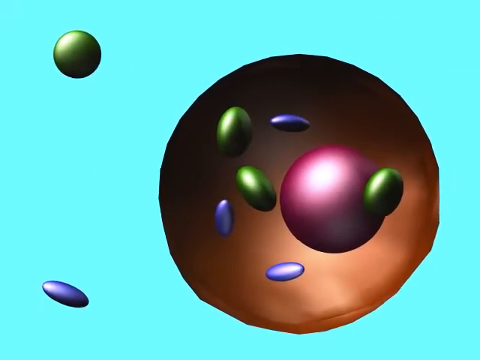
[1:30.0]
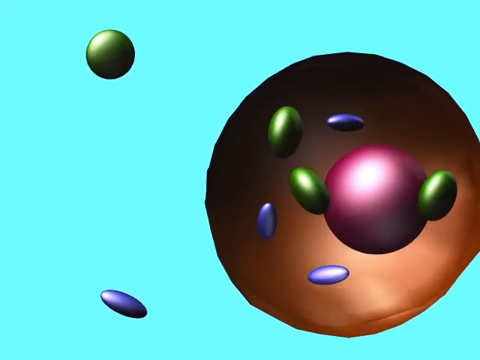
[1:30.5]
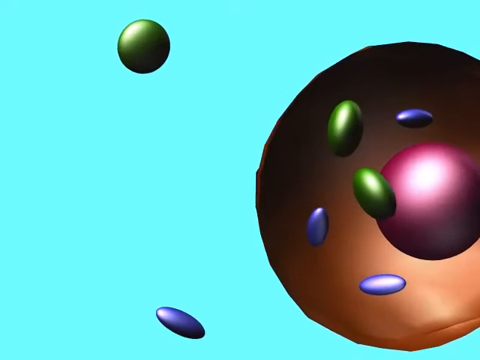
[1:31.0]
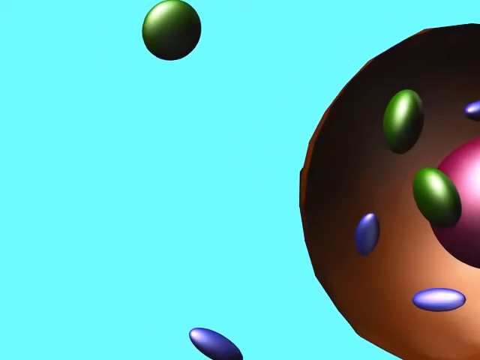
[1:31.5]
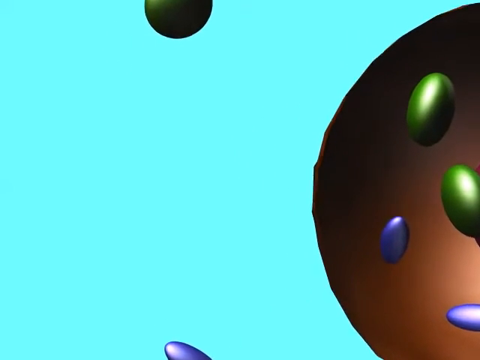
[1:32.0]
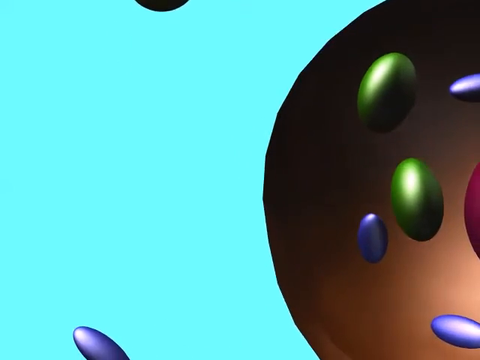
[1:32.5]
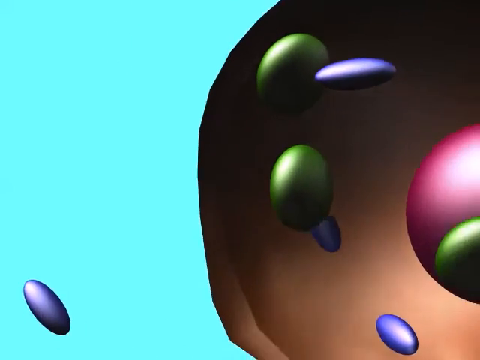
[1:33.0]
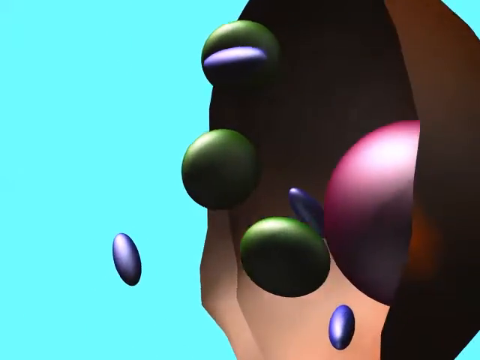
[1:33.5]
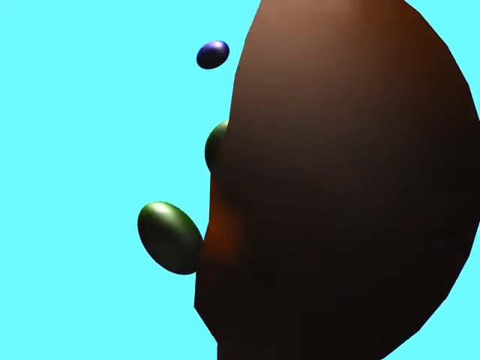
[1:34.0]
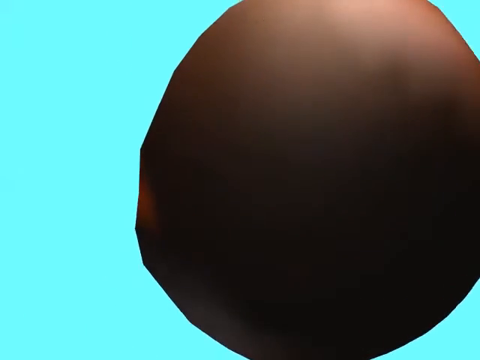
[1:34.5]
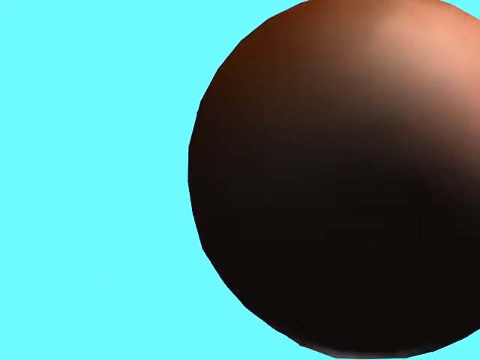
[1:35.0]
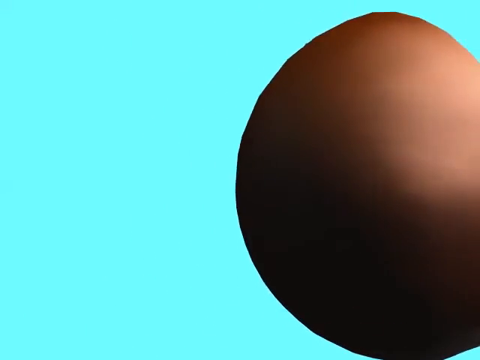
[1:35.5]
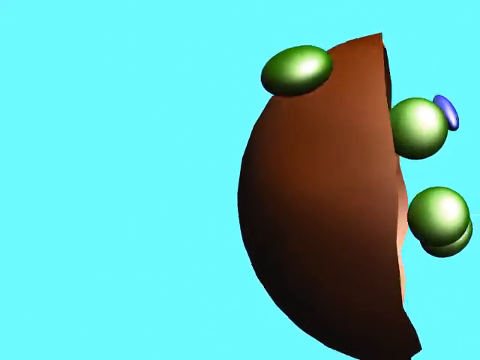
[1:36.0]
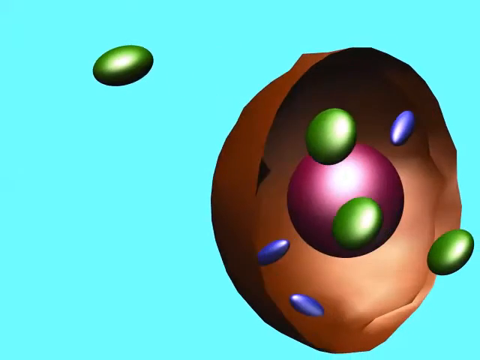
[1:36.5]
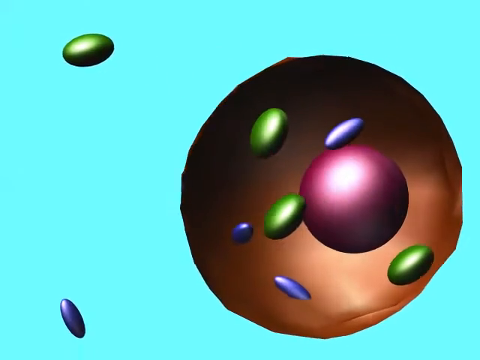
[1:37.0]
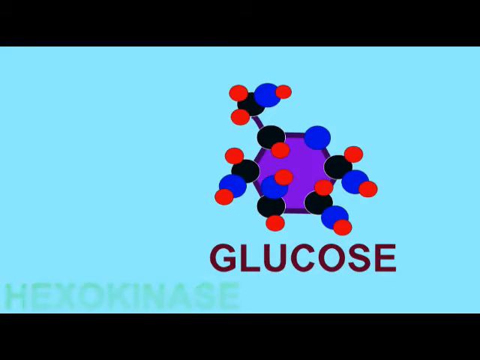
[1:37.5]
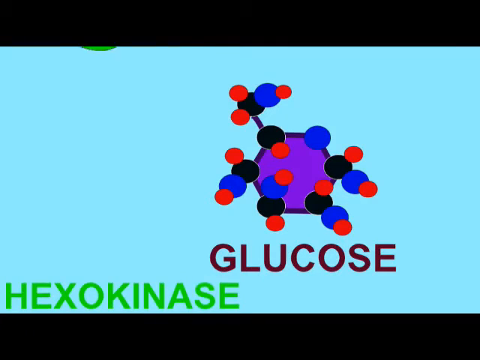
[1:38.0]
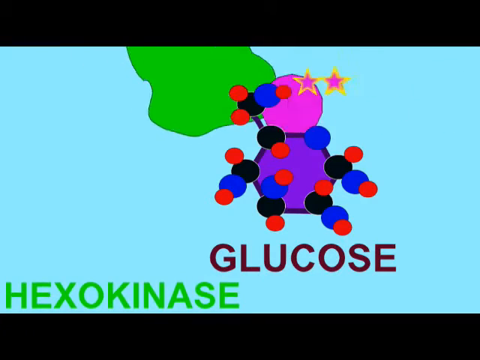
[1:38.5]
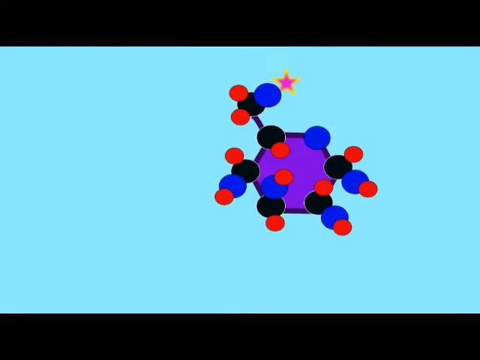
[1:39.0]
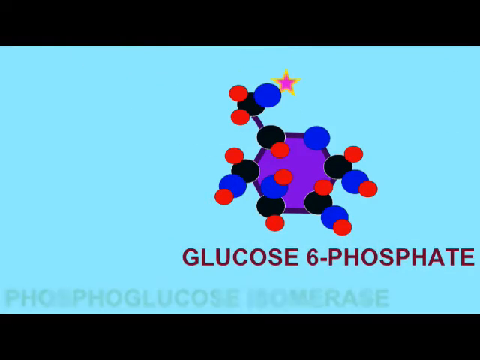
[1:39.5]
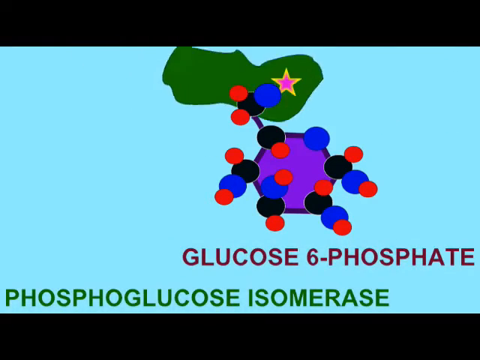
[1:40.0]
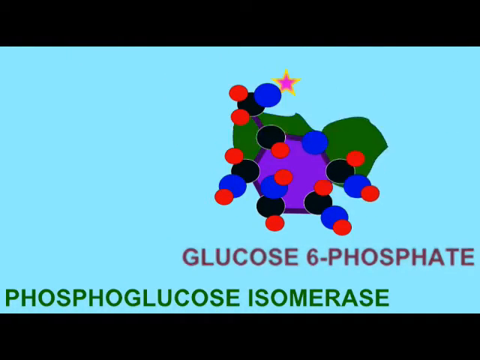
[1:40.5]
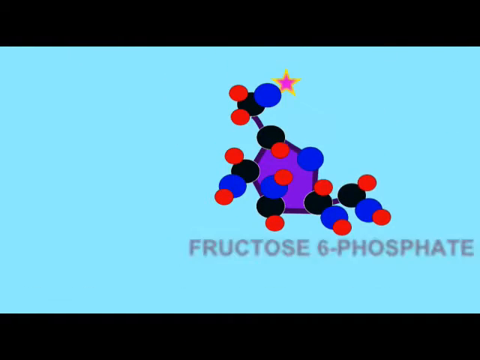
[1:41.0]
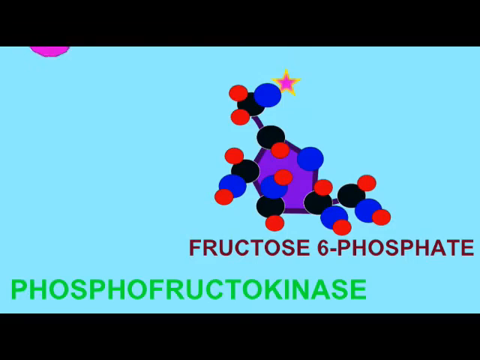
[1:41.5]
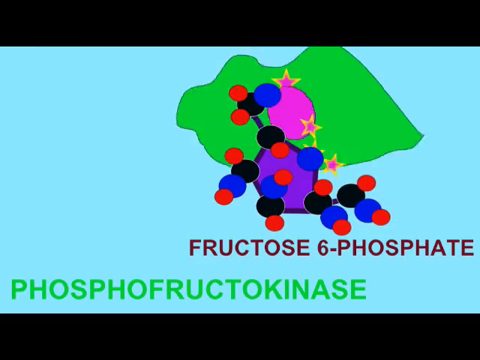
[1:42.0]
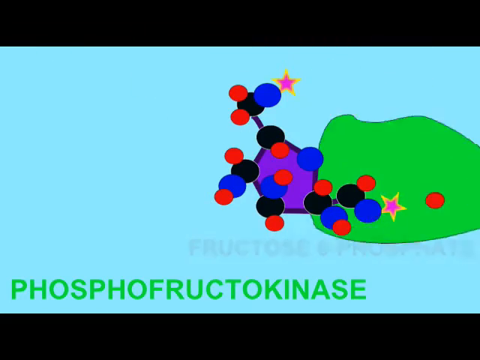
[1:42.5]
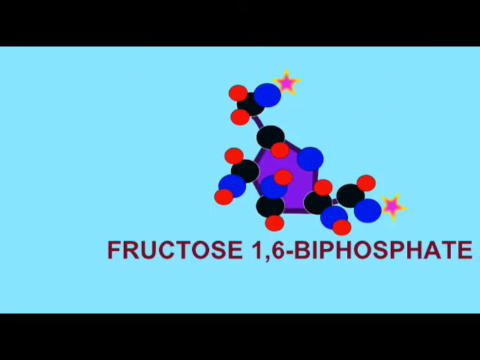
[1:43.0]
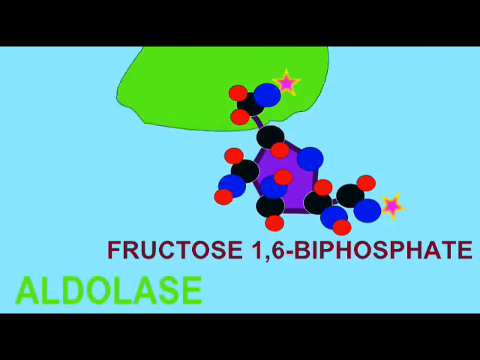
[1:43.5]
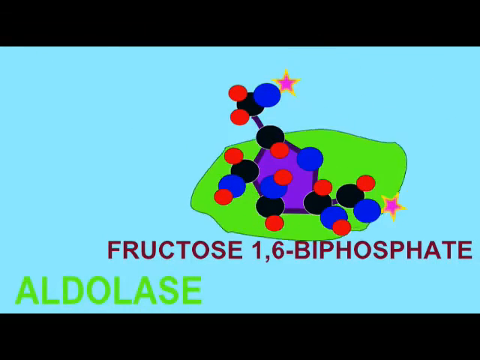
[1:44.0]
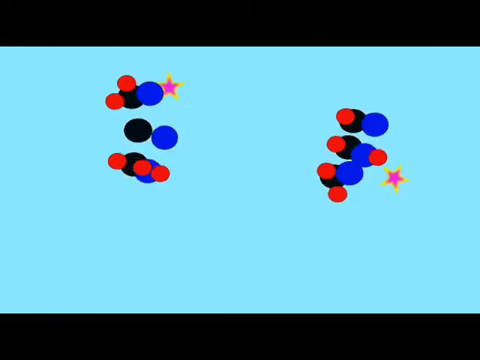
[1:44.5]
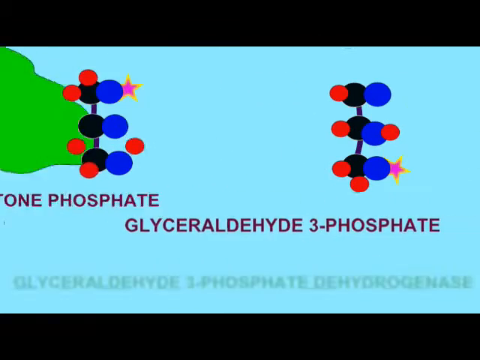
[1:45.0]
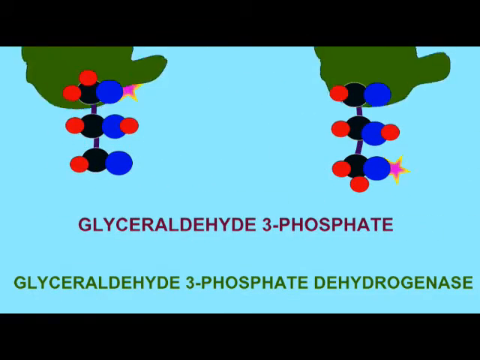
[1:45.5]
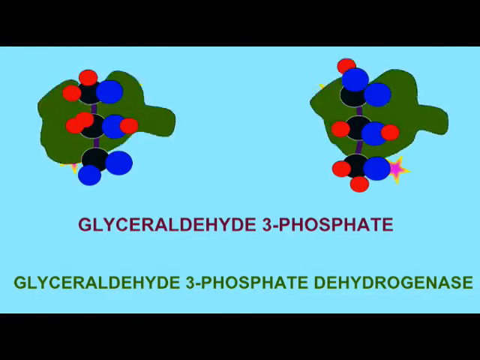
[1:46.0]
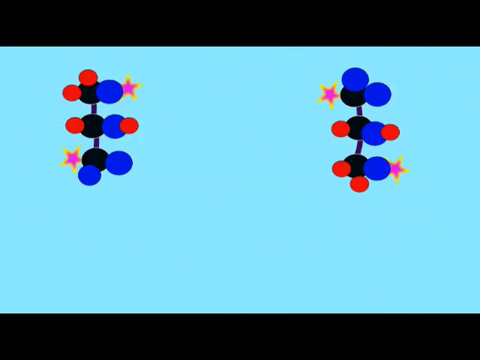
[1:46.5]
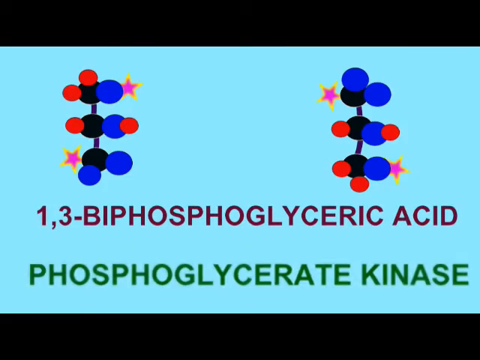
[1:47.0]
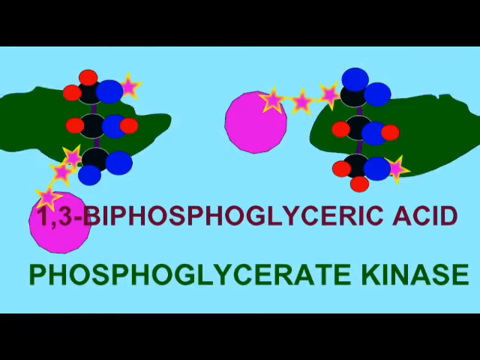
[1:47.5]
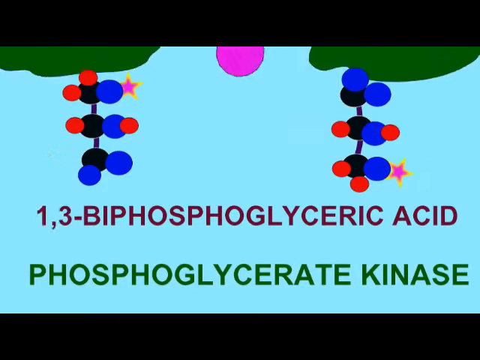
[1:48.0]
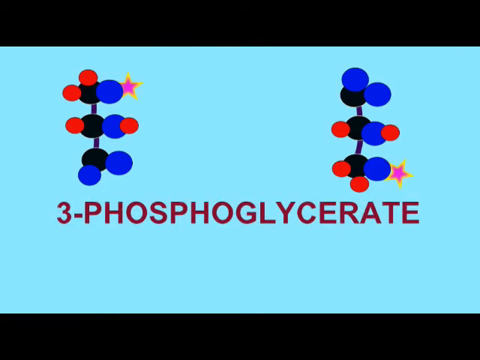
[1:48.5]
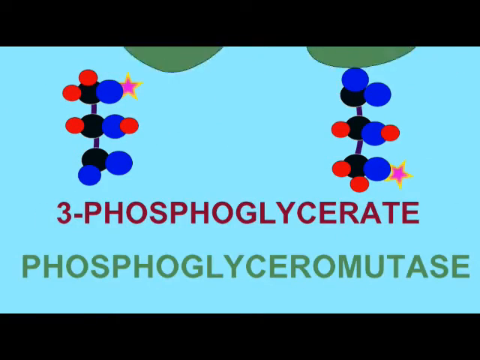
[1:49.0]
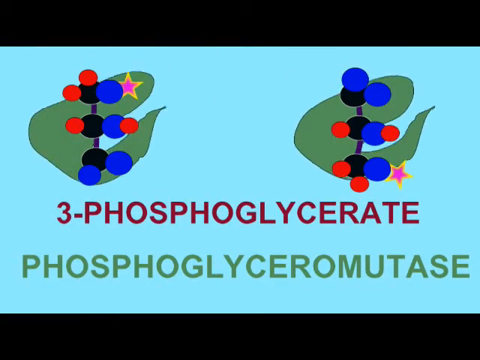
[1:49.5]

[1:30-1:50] The teal-blue background continues, with the big circle on the right side. It is brown toward the bottom and a darker, almost black brown toward the top. Inside it on the right side is a big red circle, along with a small green one, another small green one up and to the left, another small green one to the right of that, and a little blue one; down to the left, outside the circle, are two more separated blue ones. There is another blue one to the top left and another green one. All of them move over to the right, and the big circle kind of comes toward the camera and starts rotating: where the flat piece goes in on the left side, the smooth back side becomes visible as it keeps rotating in circles. The video cuts to a teal background with a glucose diagram on the right side, and in the bottom left, green text reads "hexyl kinase". A little green blob is up to the top left of the glucose. A little purple ball and two purple stars with yellow borders zoom past it. More information appears across the bottom. More of the green and purple circles come down and separate into two parts: three blue balls, some big balls, and a center portion of black balls with blue balls and red balls attached. More text appears underneath, and the green ones keep coming down and adding things to the diagram.